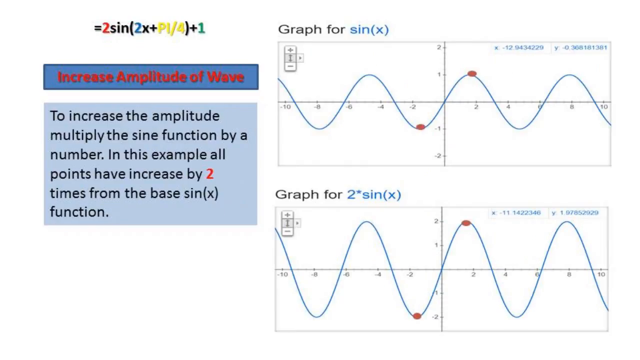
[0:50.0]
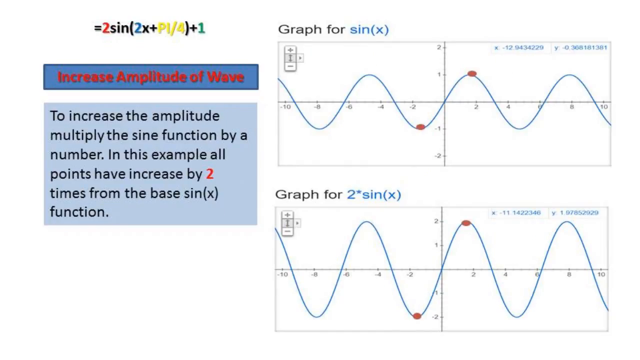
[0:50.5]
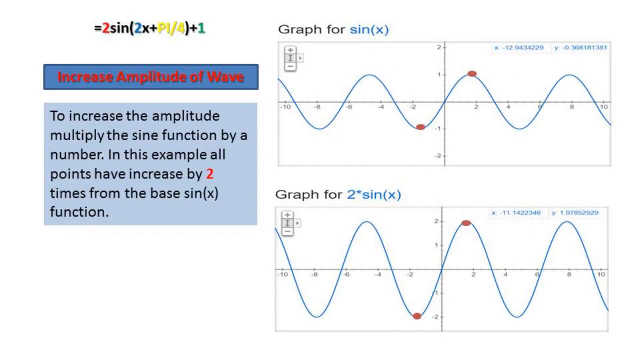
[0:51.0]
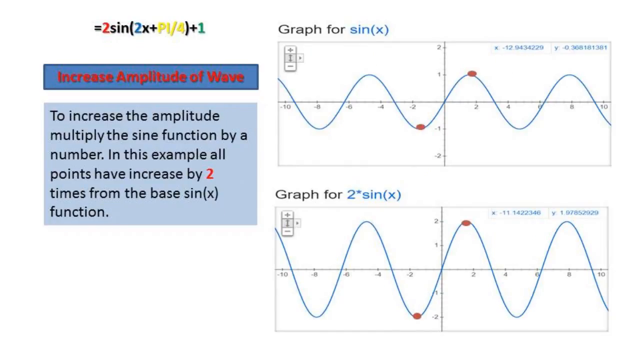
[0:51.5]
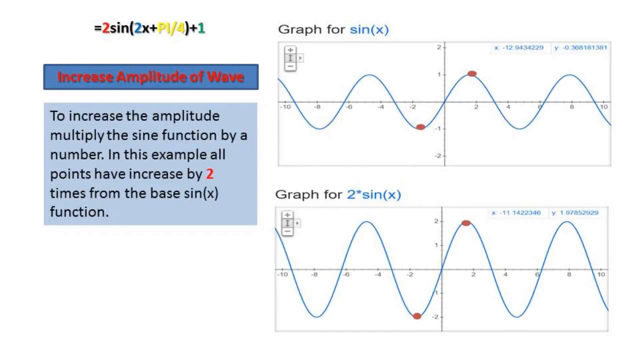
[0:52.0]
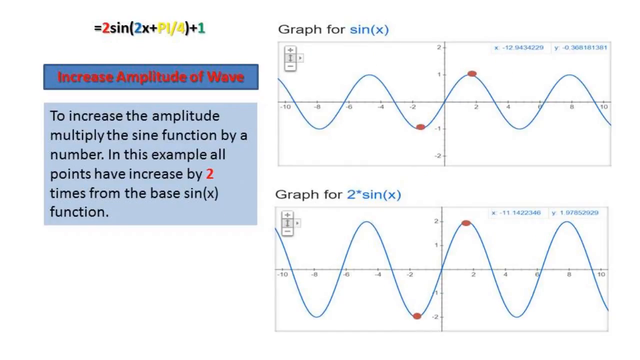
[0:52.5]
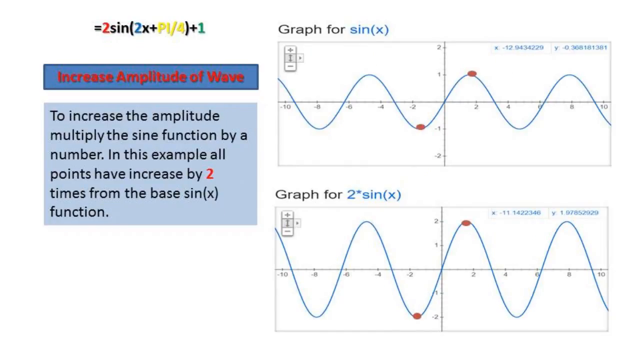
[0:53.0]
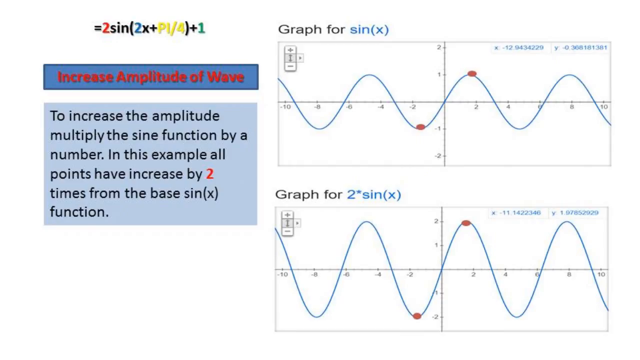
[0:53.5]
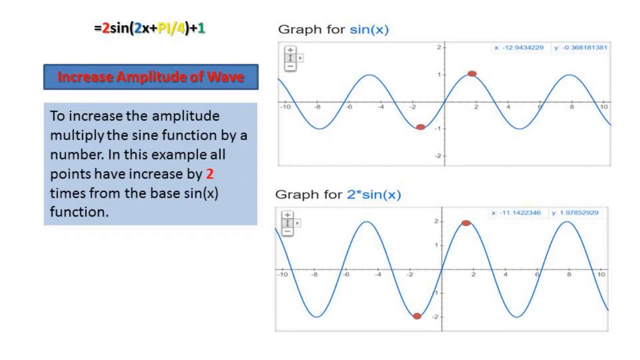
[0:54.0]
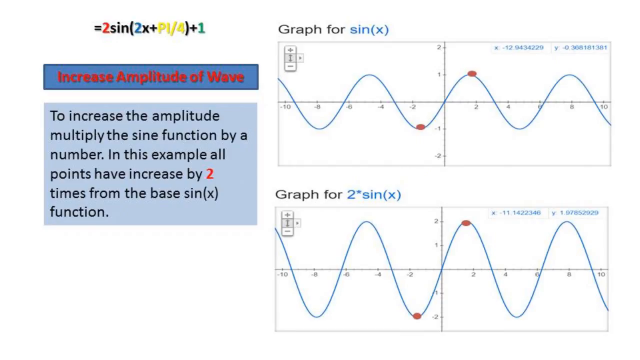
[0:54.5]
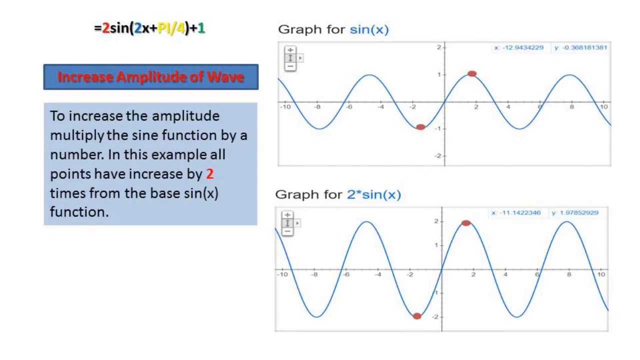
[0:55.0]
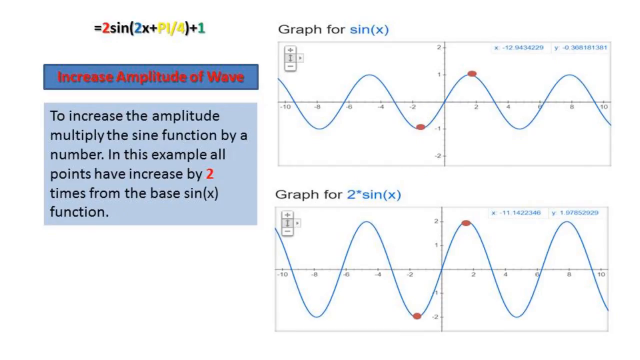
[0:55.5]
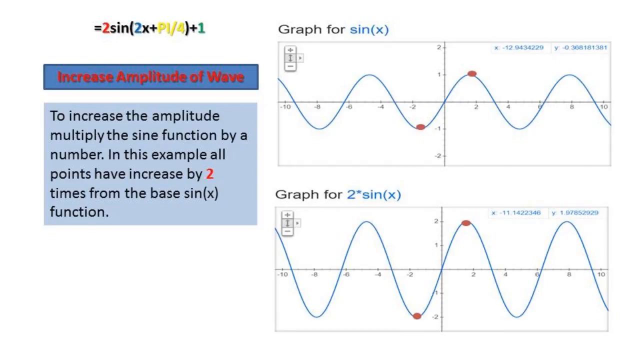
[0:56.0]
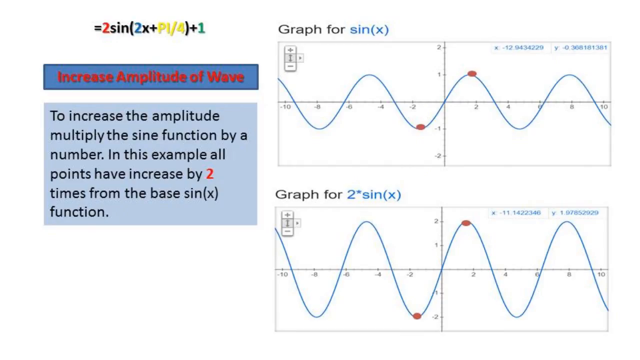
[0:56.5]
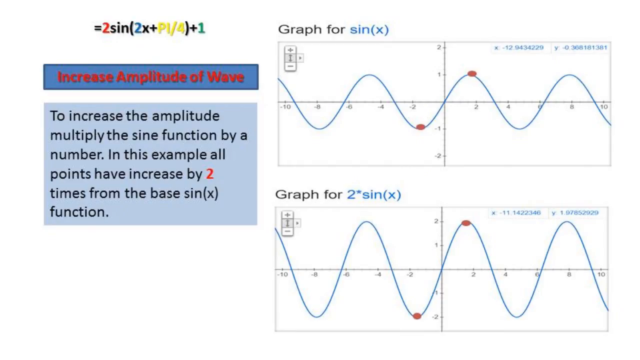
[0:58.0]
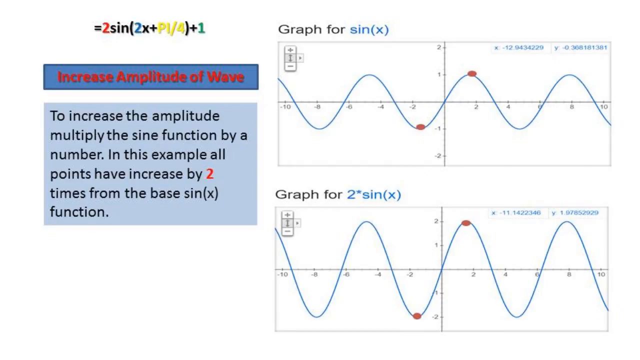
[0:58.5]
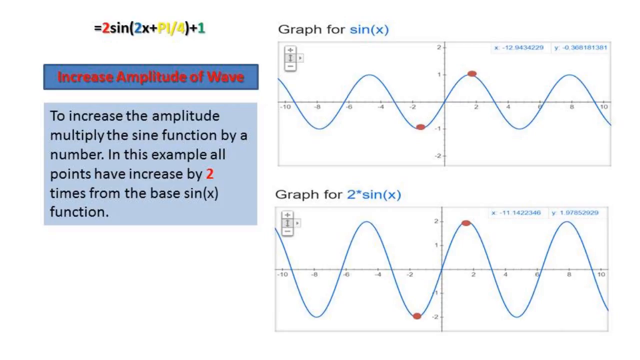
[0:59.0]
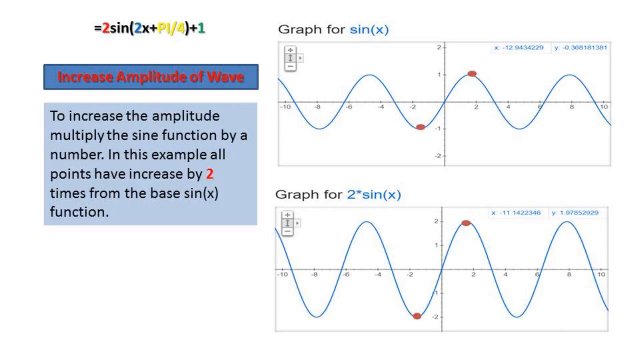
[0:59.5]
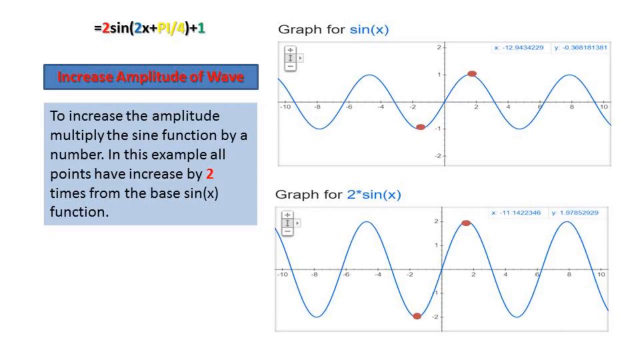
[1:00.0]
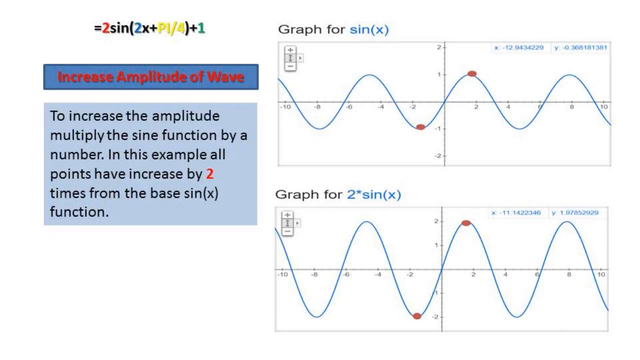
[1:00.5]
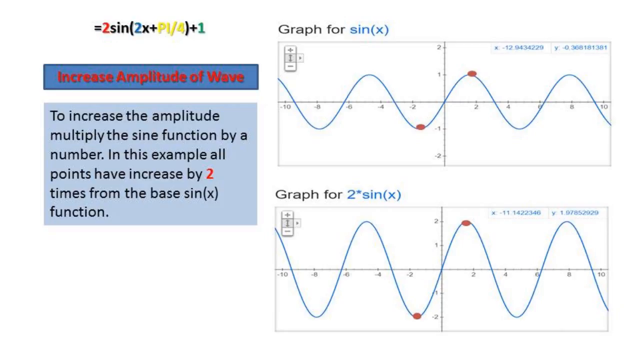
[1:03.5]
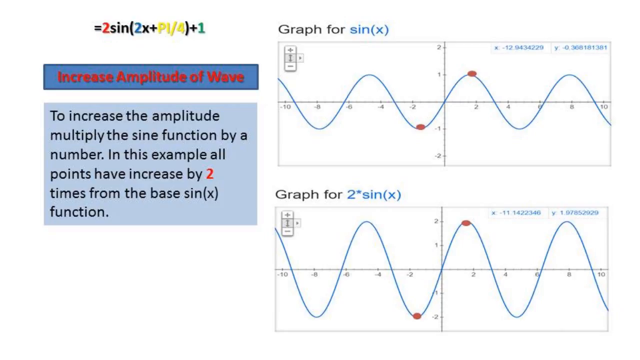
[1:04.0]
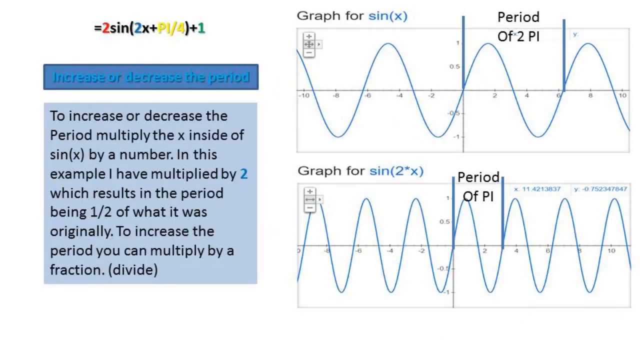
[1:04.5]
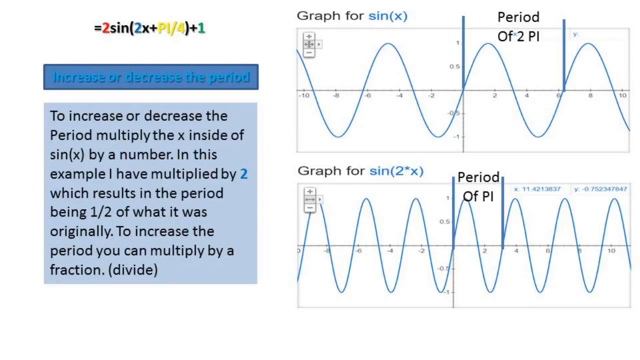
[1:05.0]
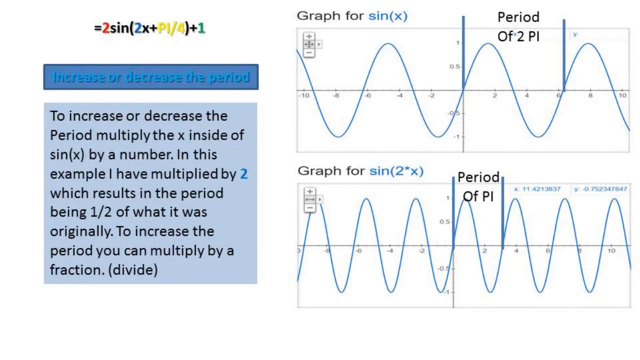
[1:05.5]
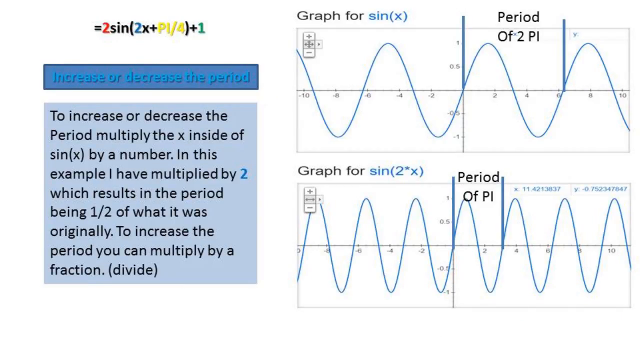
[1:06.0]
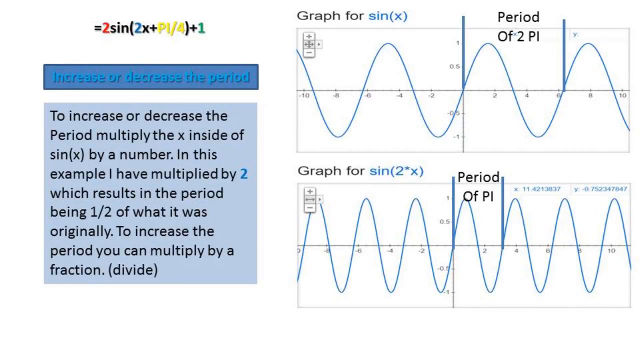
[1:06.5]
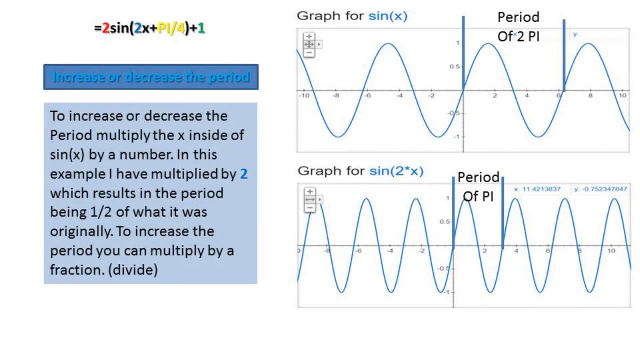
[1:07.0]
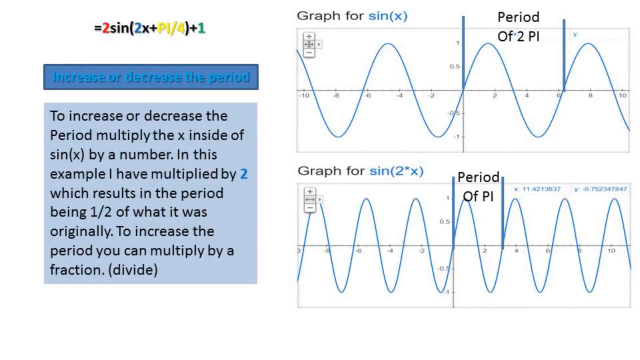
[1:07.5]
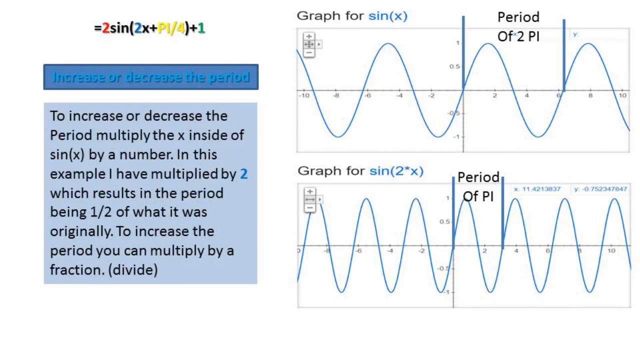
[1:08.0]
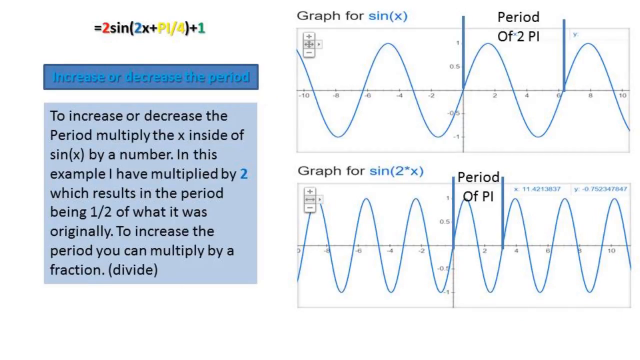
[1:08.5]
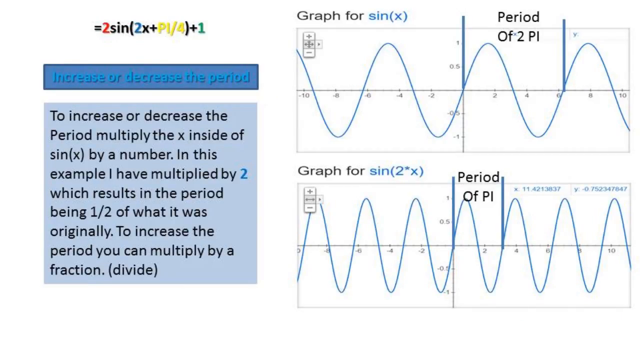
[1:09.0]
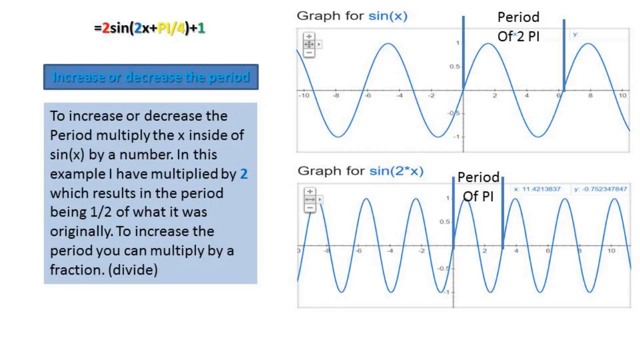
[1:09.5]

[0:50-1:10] A slide about increasing the amplitude of a wave says that to increase the amplitude, multiply the sine function by a number, and that in this example all points have increased by two times from the base sin x function. The graph of 2 sin x is clearly different, with its points waving out to 2, while sin x does not reach as far. A line of text reads "to increase or decrease the period multiply the x inside of sine x by a number. In this example I have multiplied by 2 which results in the period being 1.5 of what it was originally." It also says that to increase the period you can multiply by a fraction, and the word "divide" appears. A graph of sin 2x is shown, with periods of 2π.